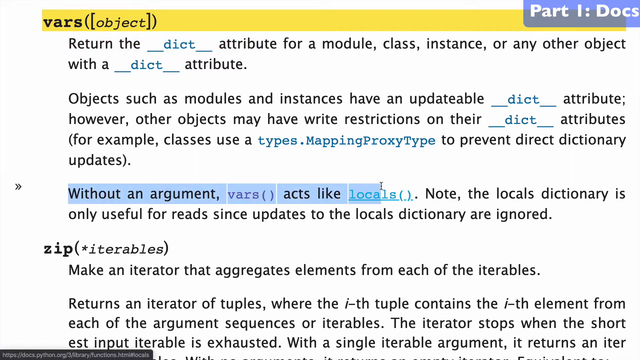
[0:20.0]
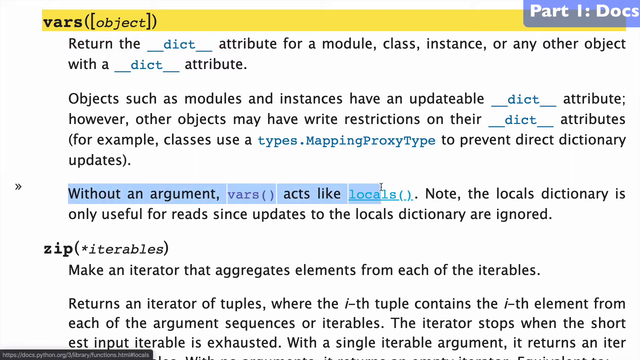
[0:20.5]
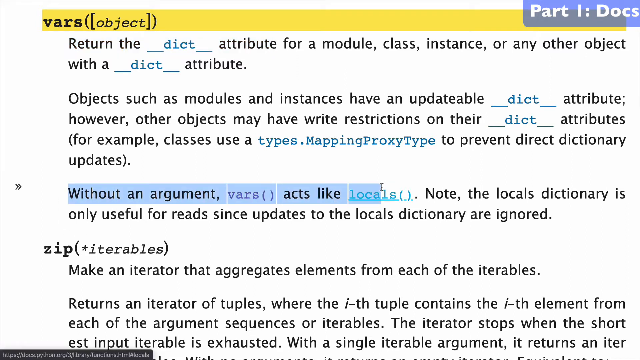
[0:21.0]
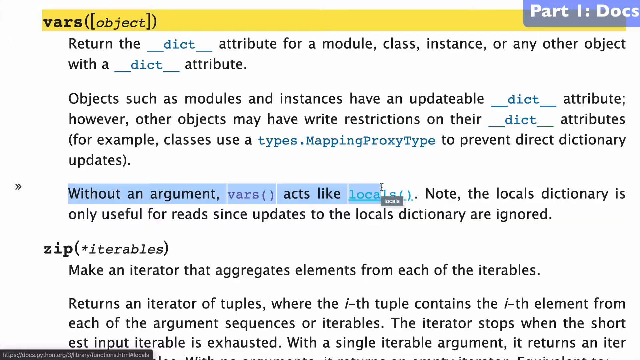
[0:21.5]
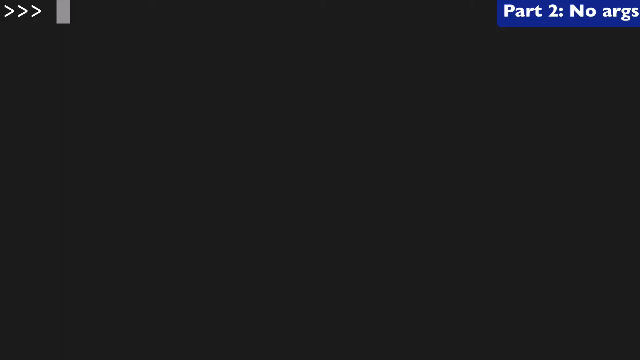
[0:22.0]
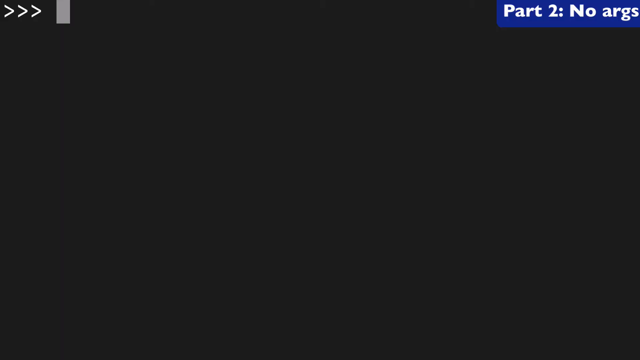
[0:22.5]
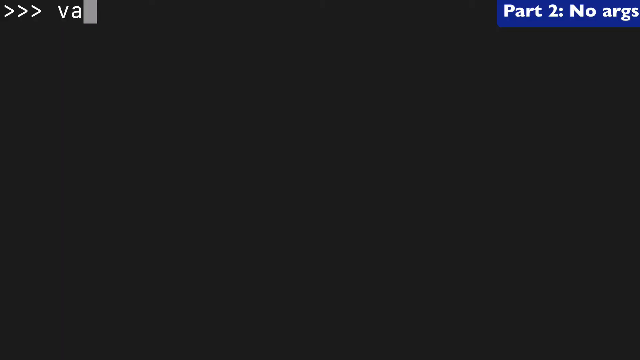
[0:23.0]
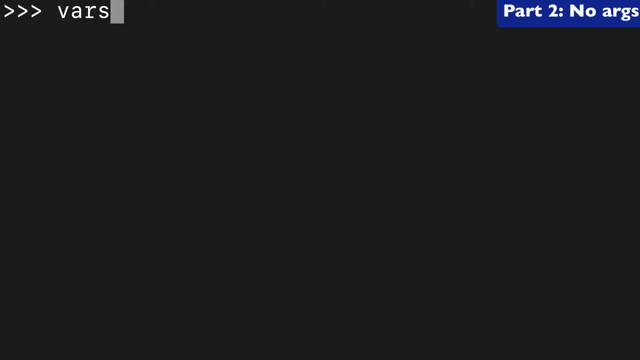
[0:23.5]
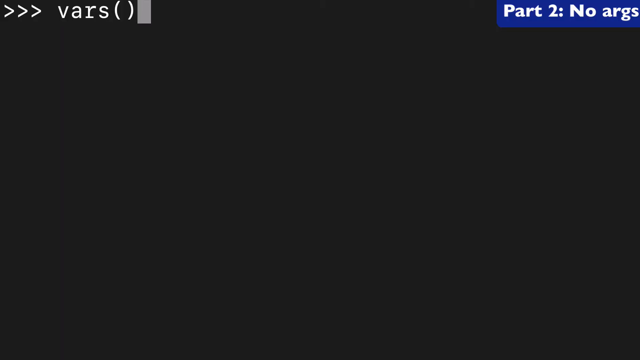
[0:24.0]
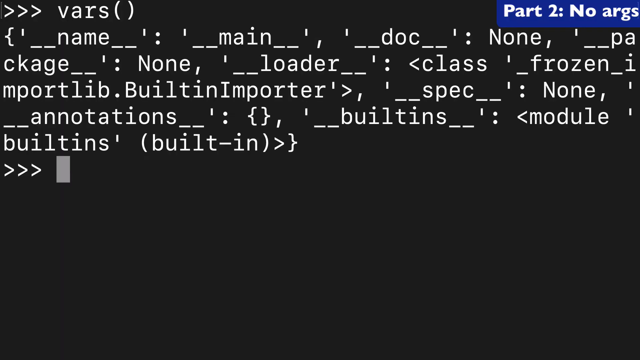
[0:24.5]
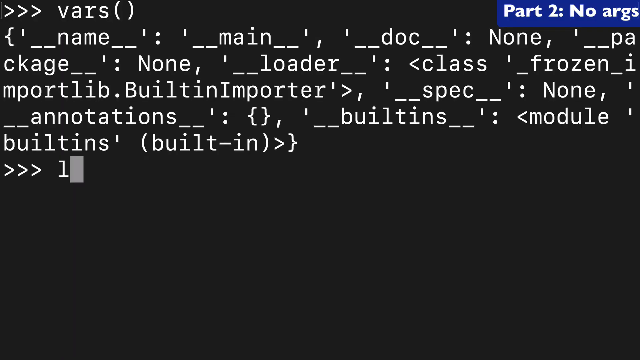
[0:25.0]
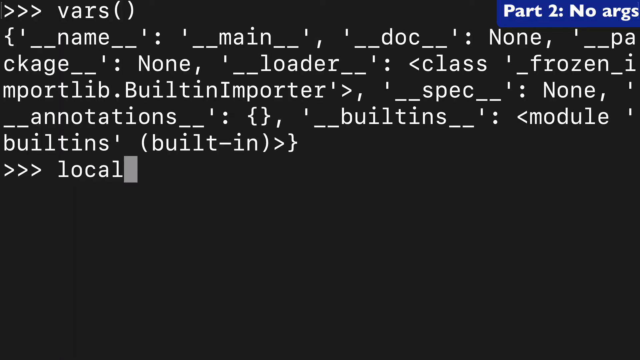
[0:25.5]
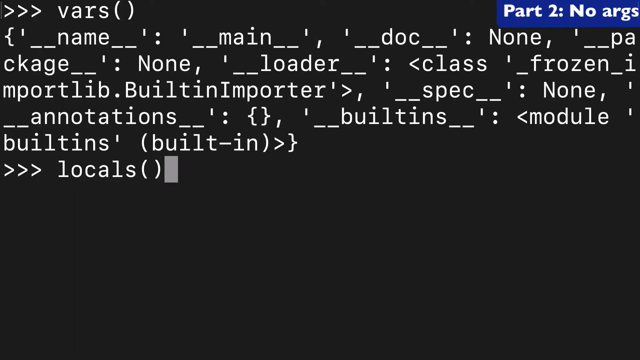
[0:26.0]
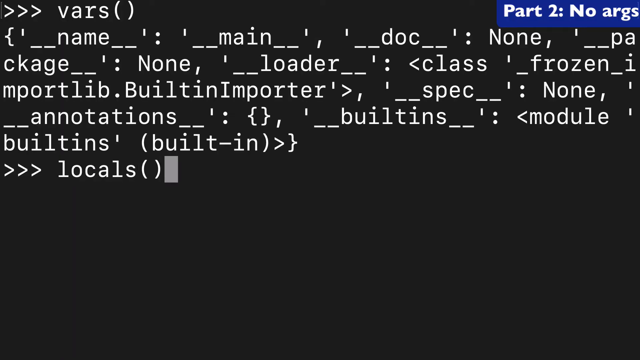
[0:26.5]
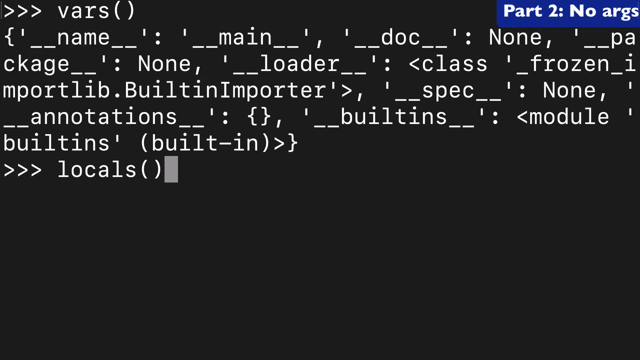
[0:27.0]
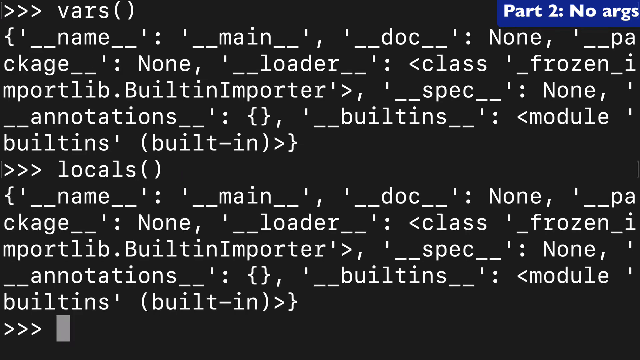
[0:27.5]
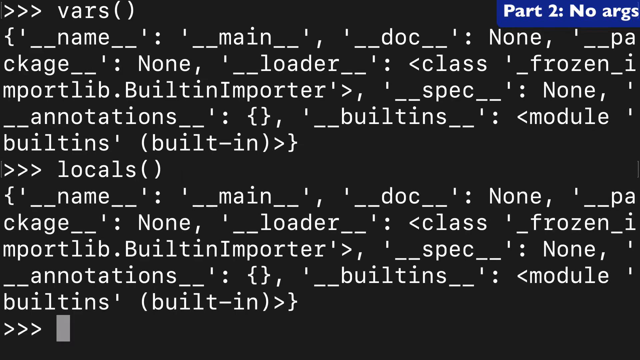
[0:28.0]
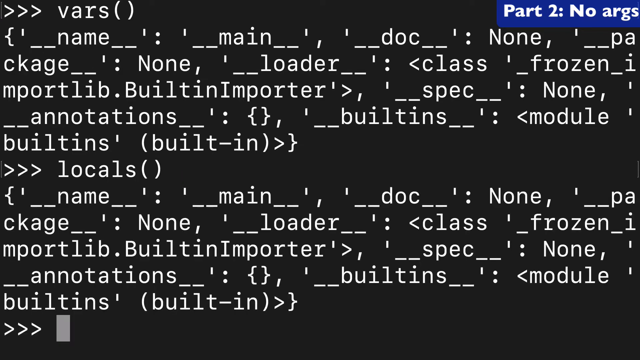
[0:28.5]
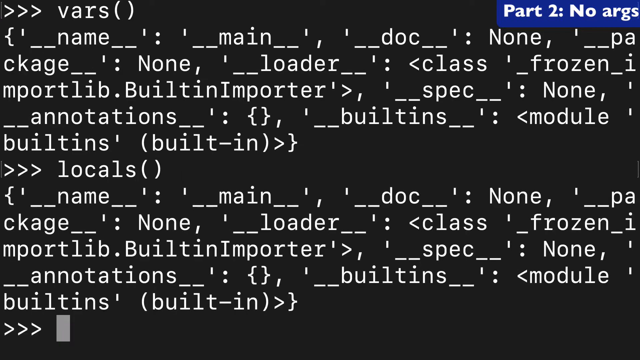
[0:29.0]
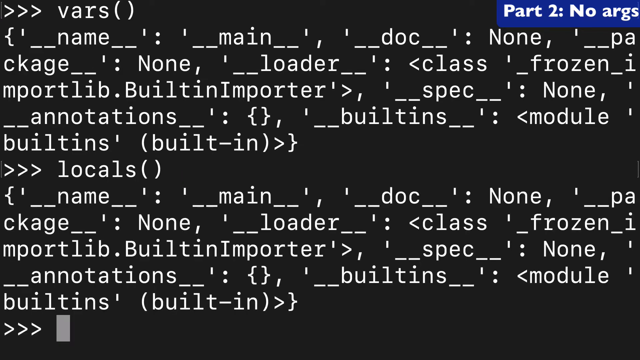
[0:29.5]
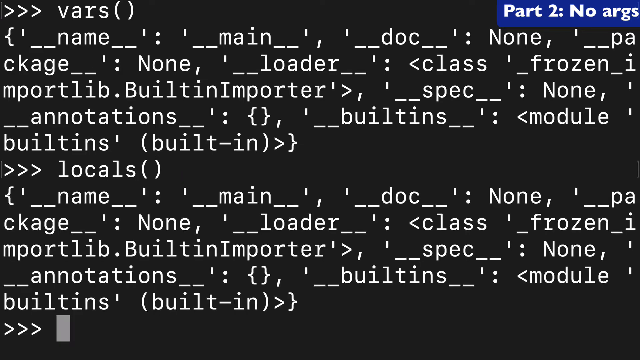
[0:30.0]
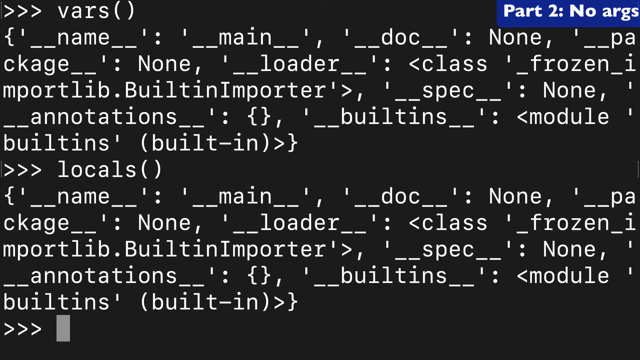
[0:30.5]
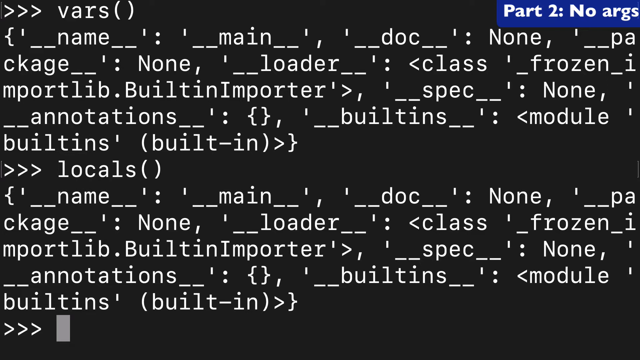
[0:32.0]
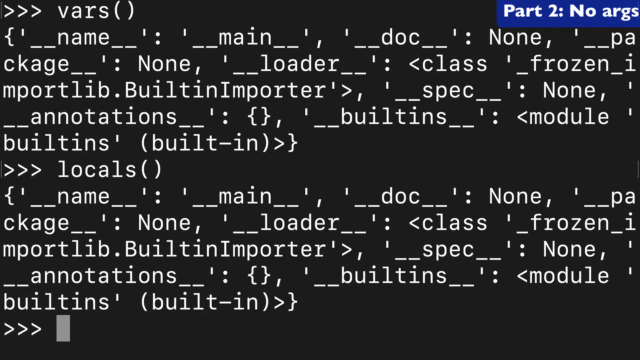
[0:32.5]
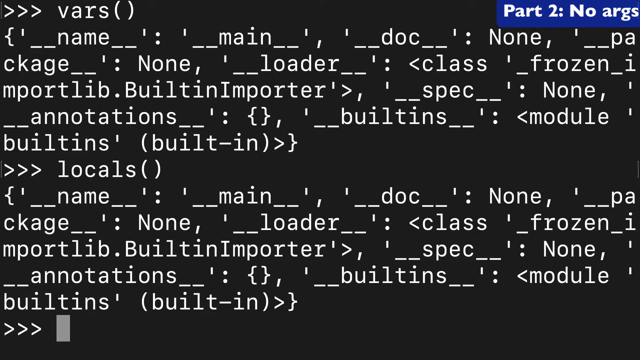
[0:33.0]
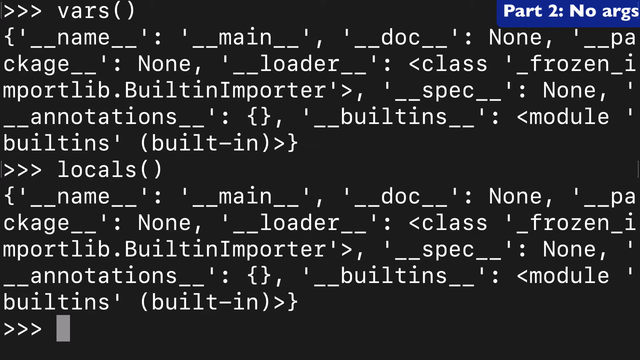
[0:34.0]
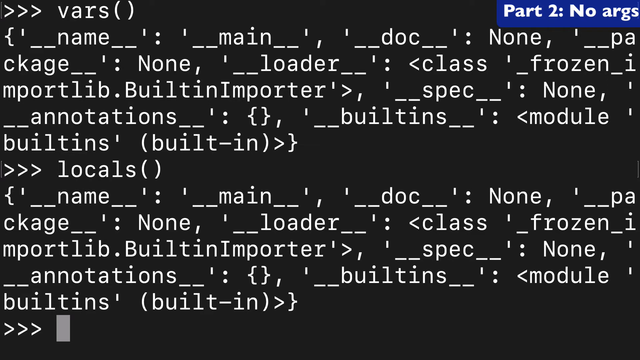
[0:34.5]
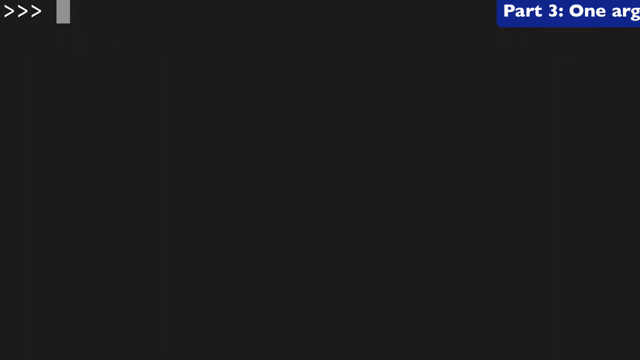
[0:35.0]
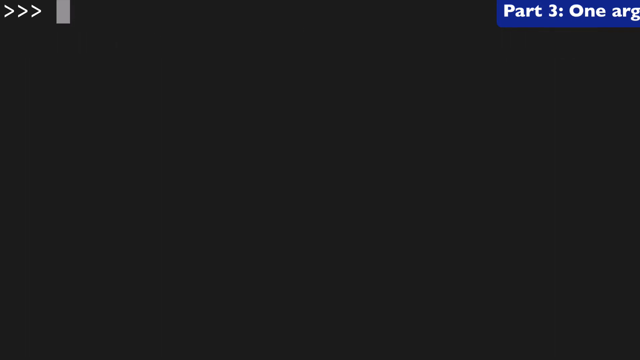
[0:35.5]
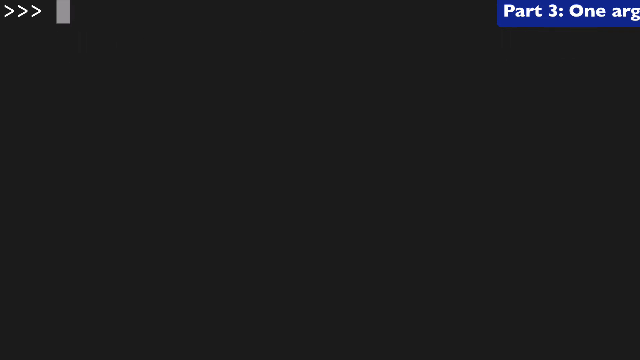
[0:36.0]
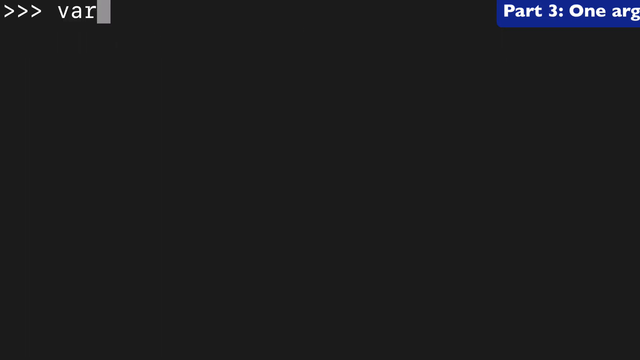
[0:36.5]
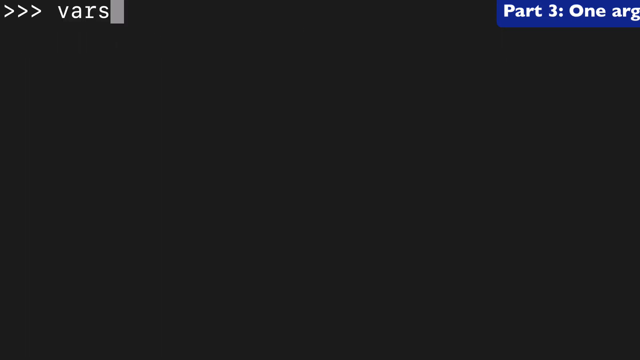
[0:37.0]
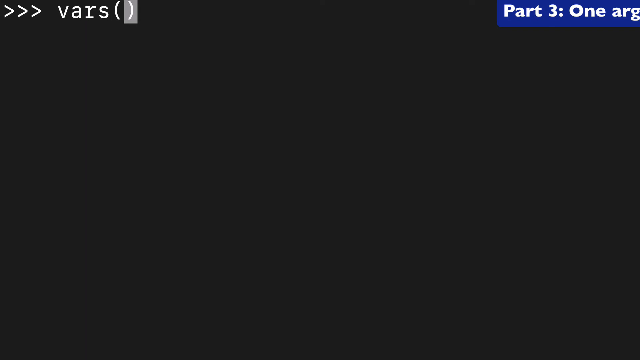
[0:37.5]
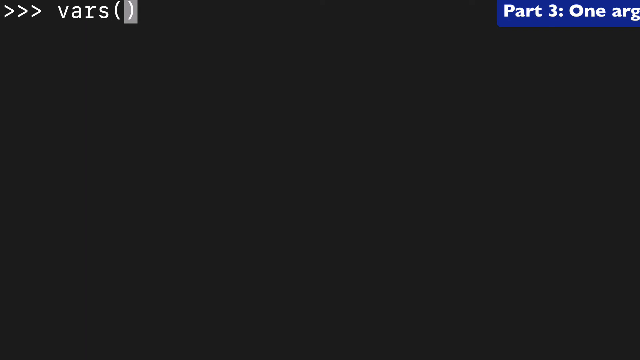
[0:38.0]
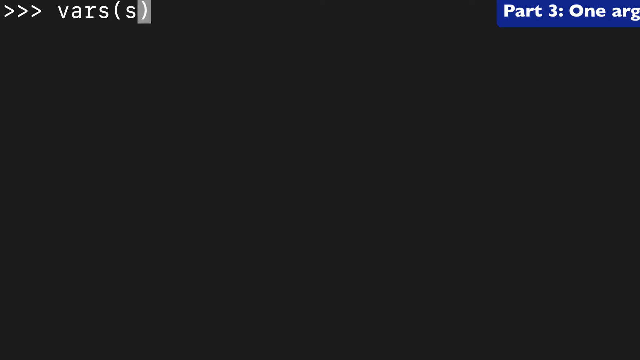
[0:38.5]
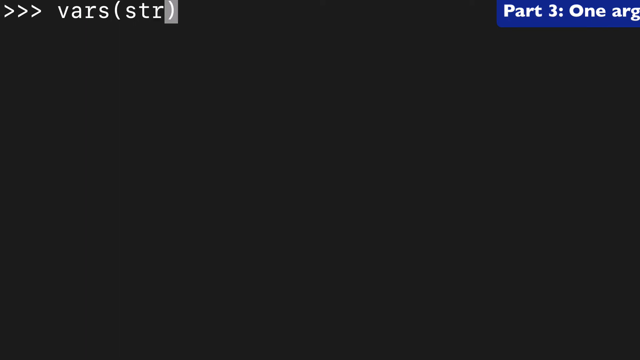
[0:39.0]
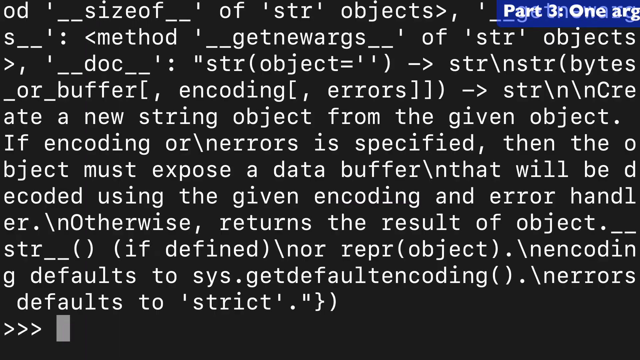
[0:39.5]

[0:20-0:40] More text is on screen. It apparently reads "vars" with parentheses containing "object", seemingly defining the function, followed by "return a dict attribute to the module, class, instance, or any other object with a dict attribute." Some of the words are highlighted, including something about vars acting like locals, and the text continues with "only useful for reads" and "updates to the local dictionary are ignored." The screen then goes black, and someone types in white font, possibly HTML, after a greater-than sign: "vars" with parentheses, followed by double underscores and dots, "__main__", "__doc__", and "None". The person keeps typing to fill up the screen.